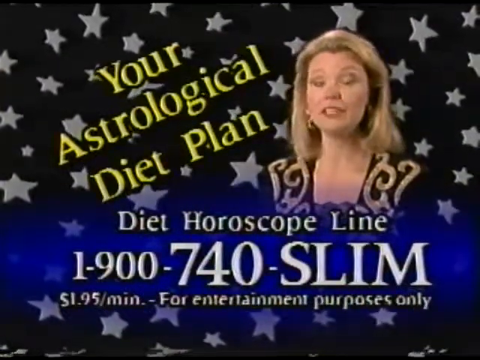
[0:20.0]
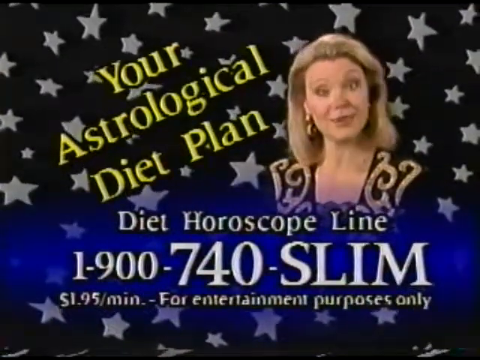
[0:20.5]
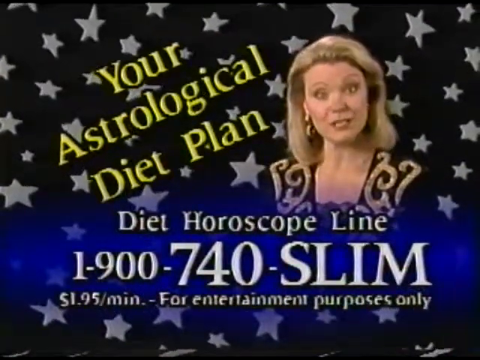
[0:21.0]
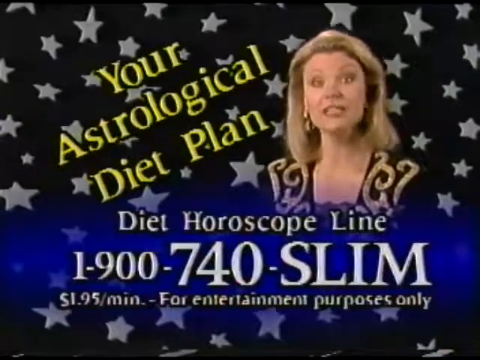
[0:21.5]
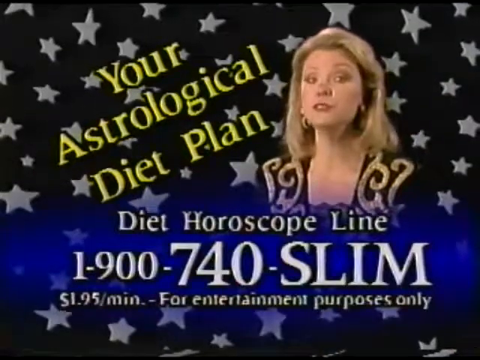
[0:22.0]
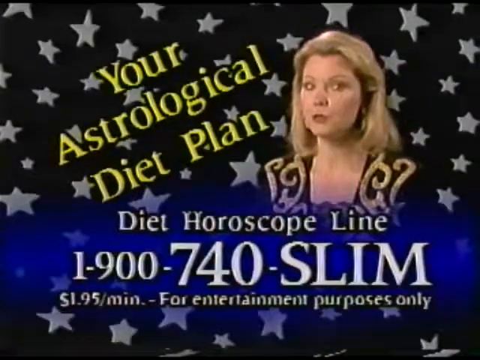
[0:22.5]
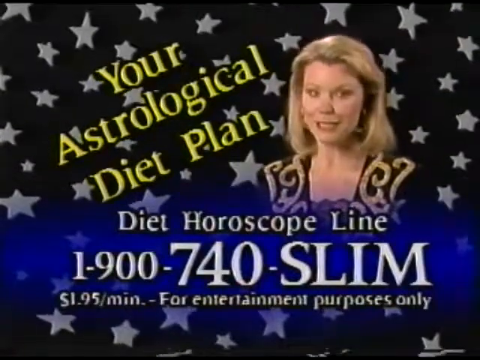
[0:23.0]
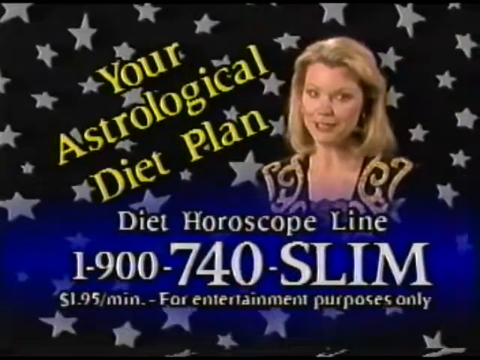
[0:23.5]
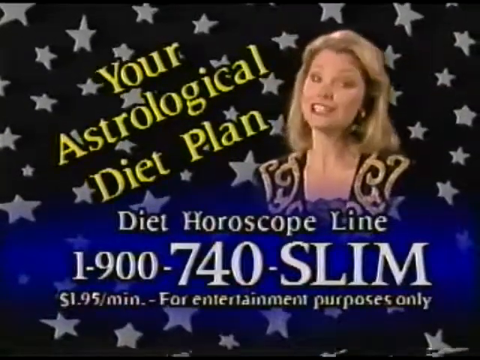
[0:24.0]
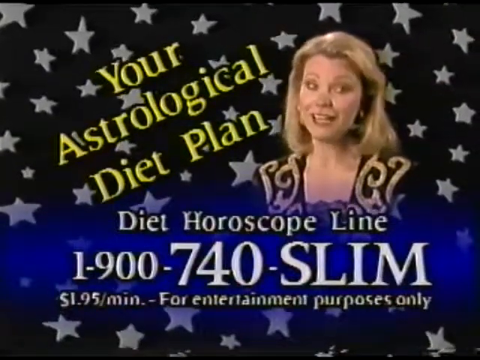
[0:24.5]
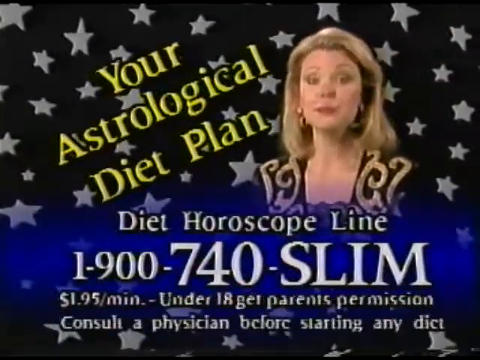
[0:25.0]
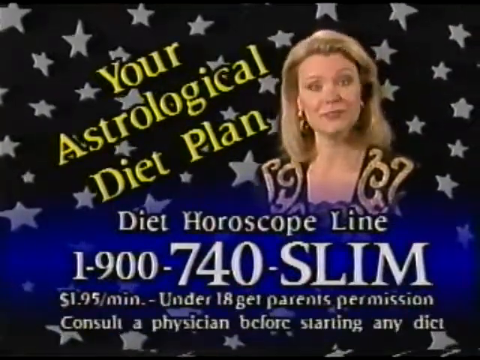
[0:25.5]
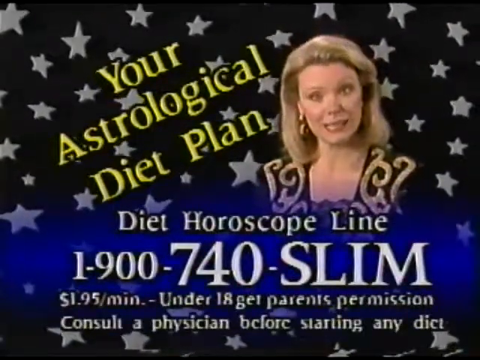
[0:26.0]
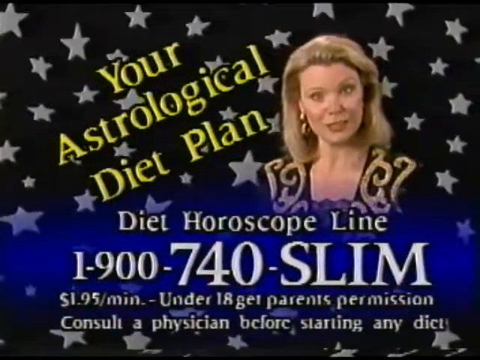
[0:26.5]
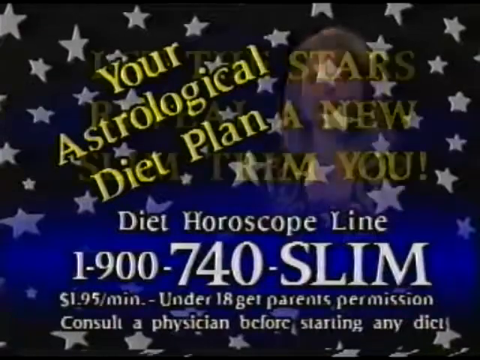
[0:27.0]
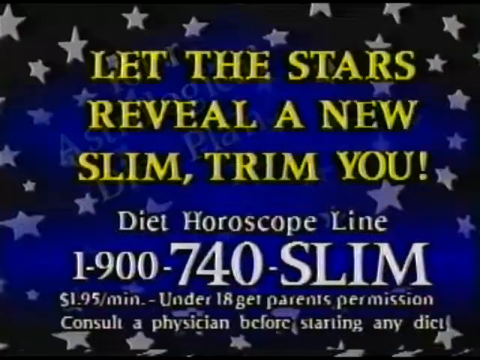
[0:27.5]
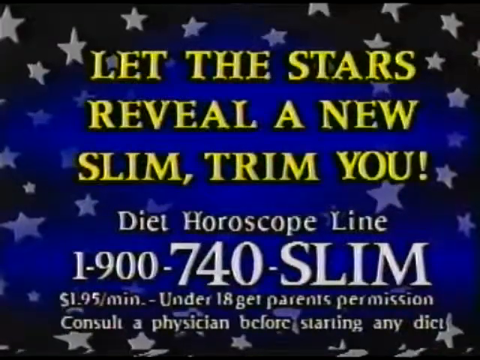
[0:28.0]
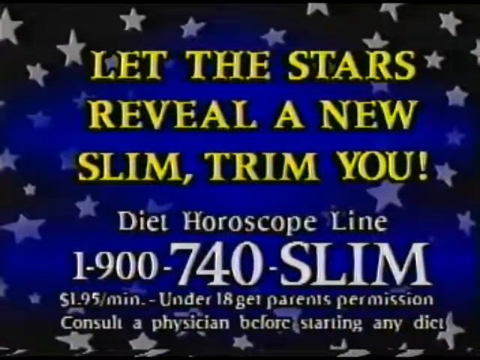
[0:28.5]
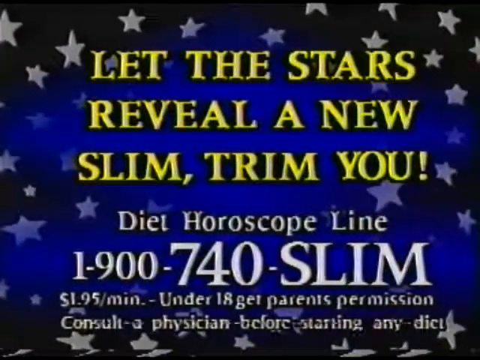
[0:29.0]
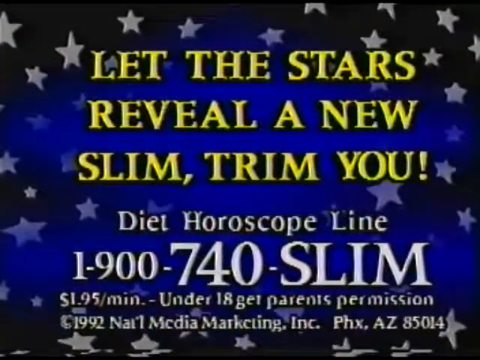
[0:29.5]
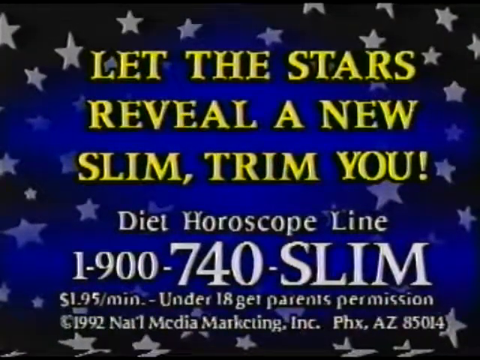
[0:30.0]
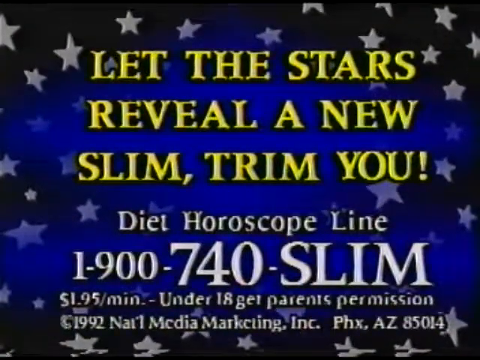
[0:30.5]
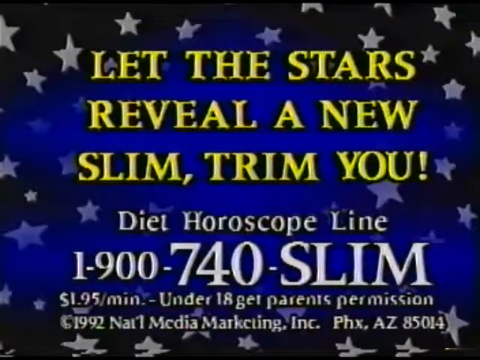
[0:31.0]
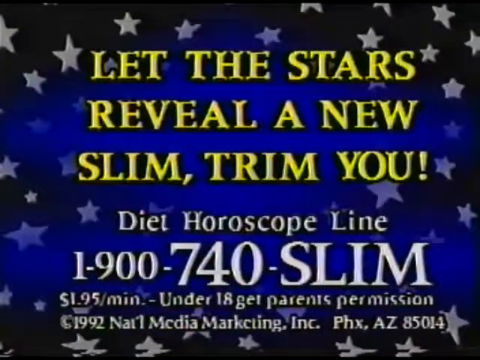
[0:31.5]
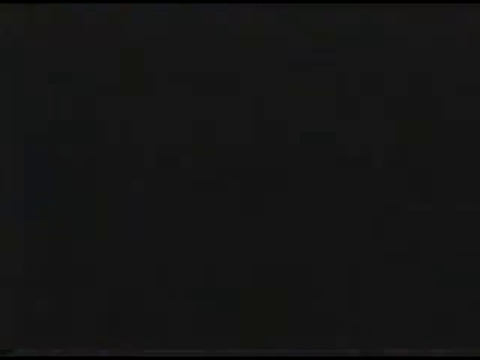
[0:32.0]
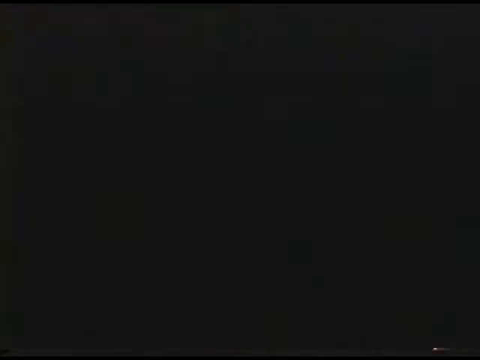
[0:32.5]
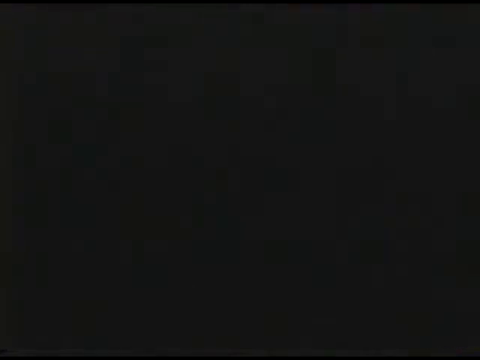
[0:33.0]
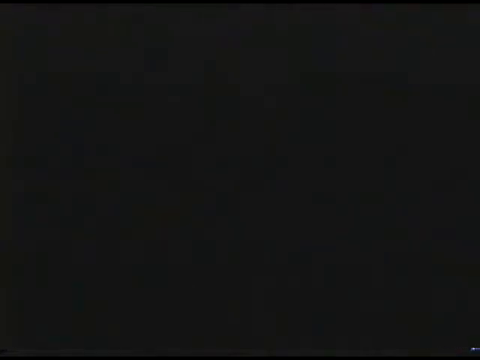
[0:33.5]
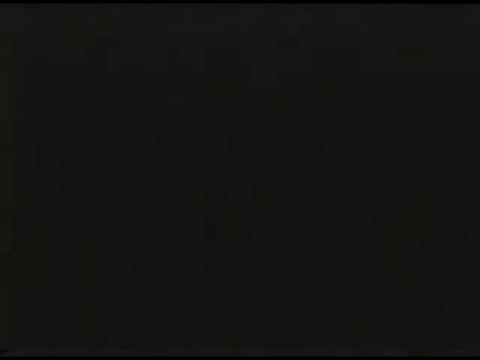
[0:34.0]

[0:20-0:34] The video is an advertisement for an astrological diet plan. A woman is speaking; she says, "let the stars reveal a new, slim, trim you." Then the screen goes to black, and then it goes back to the woman. The background is black with white stars all over it. At the bottom there is kind of a blue haze around the text "diet horoscope line." The text "1-900-740-SLIM" is written like a phone number, and below that it says "$1.95 a minute for entertainment purposes only." The woman appears to be middle-aged and blonde.